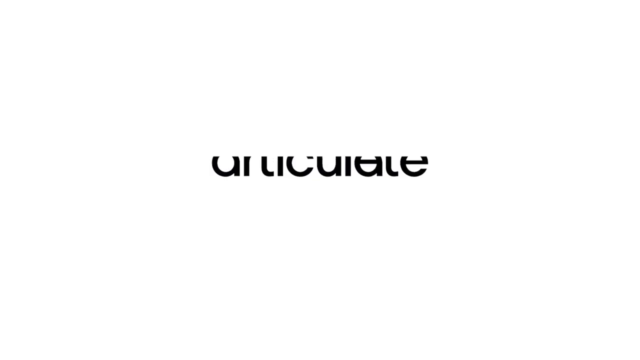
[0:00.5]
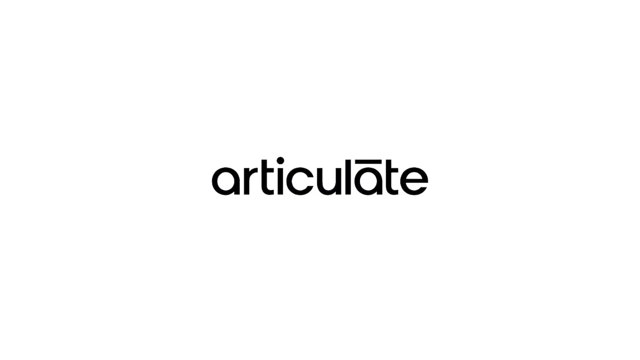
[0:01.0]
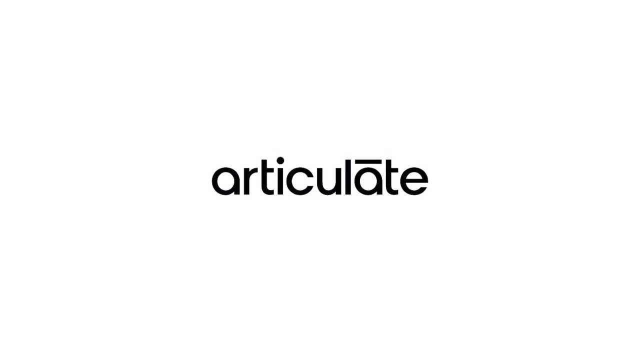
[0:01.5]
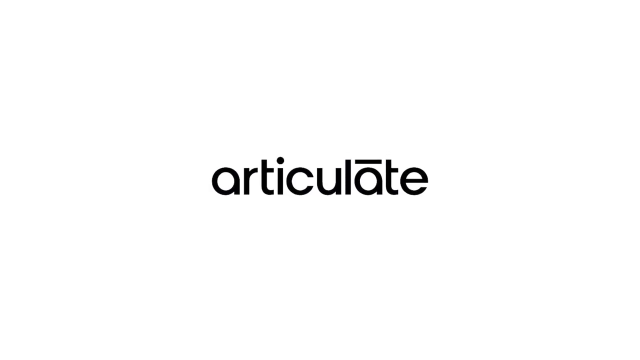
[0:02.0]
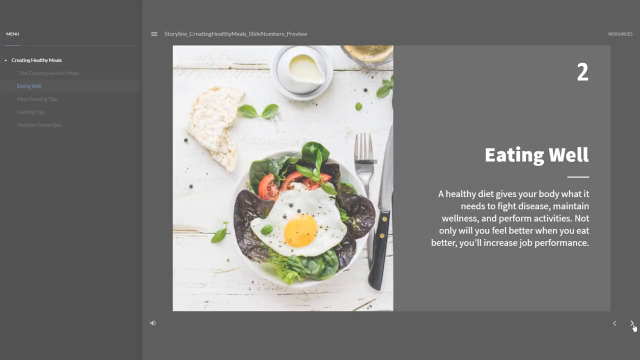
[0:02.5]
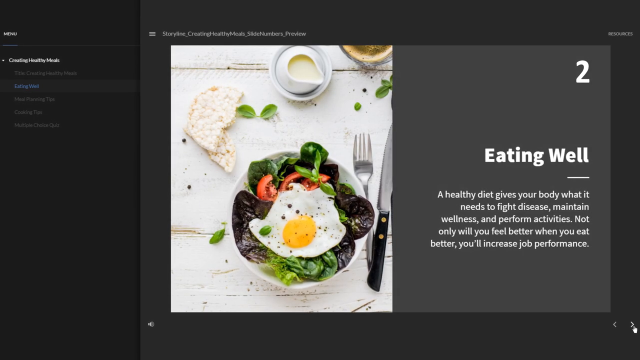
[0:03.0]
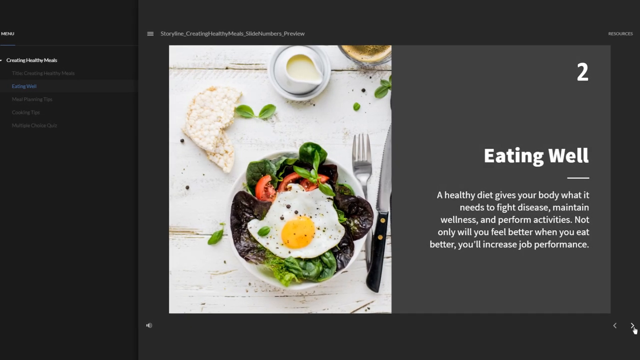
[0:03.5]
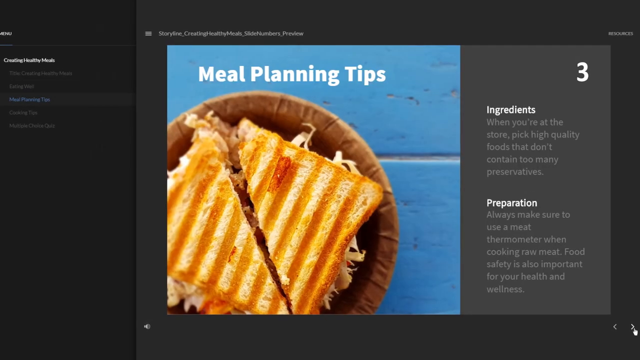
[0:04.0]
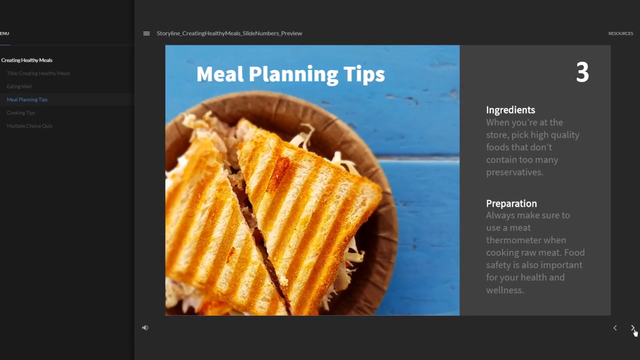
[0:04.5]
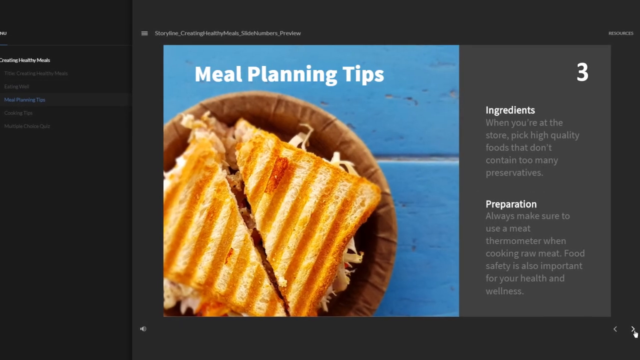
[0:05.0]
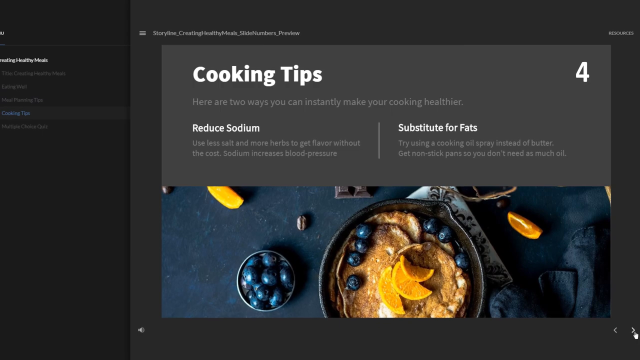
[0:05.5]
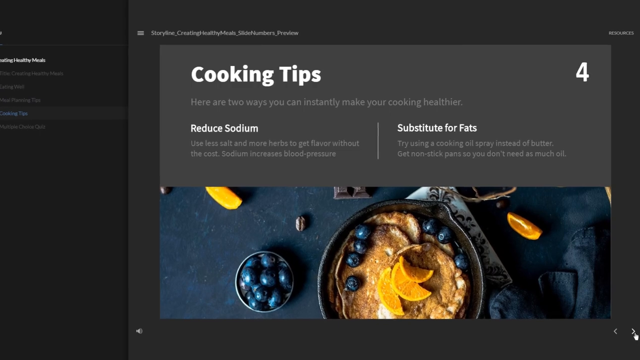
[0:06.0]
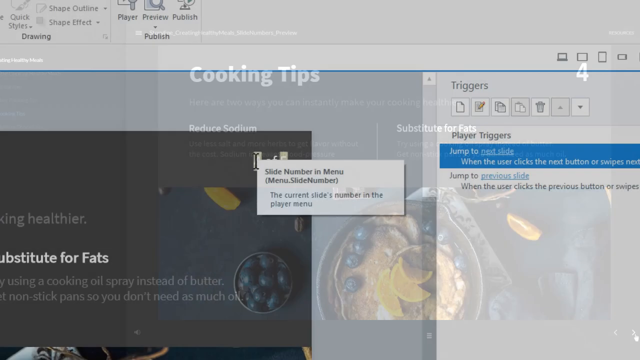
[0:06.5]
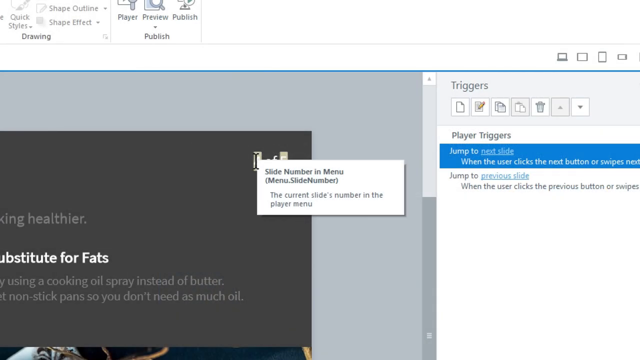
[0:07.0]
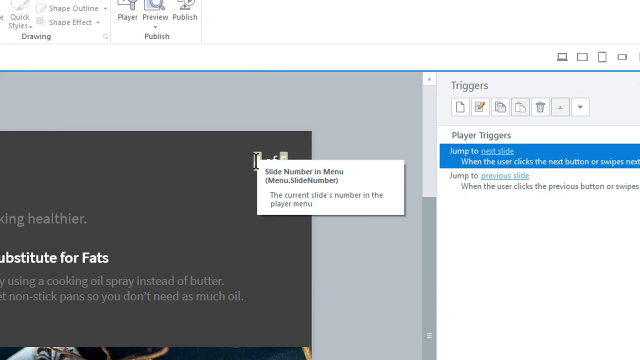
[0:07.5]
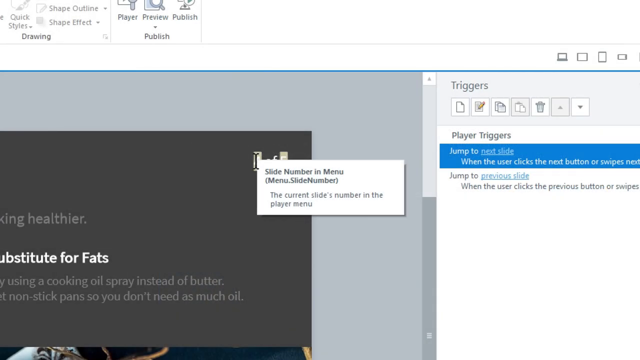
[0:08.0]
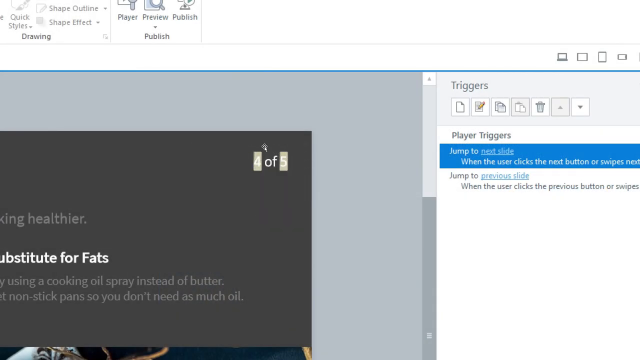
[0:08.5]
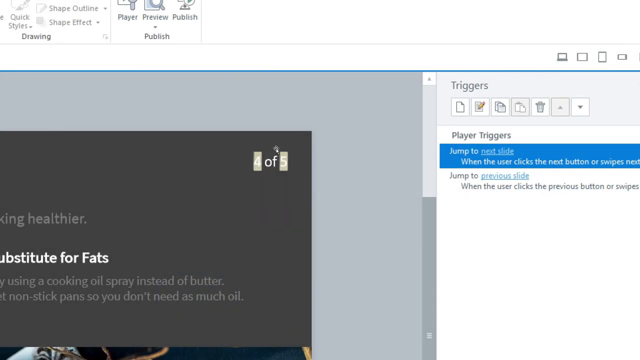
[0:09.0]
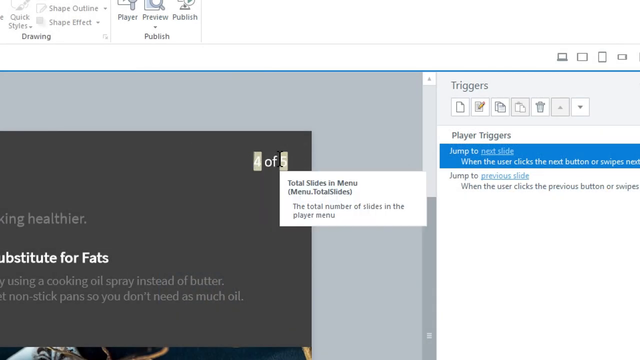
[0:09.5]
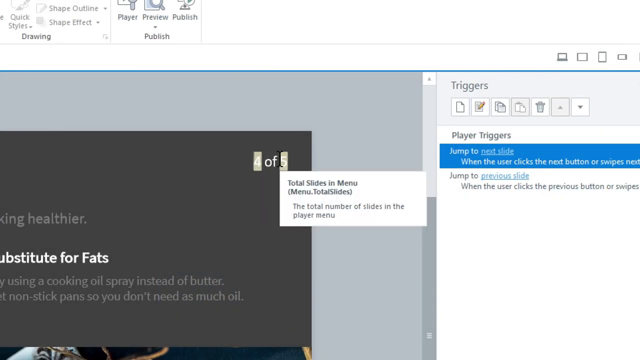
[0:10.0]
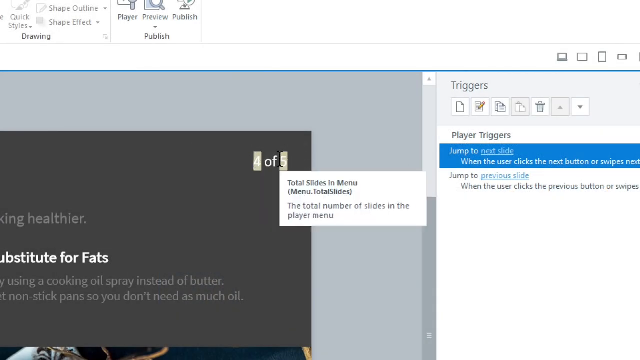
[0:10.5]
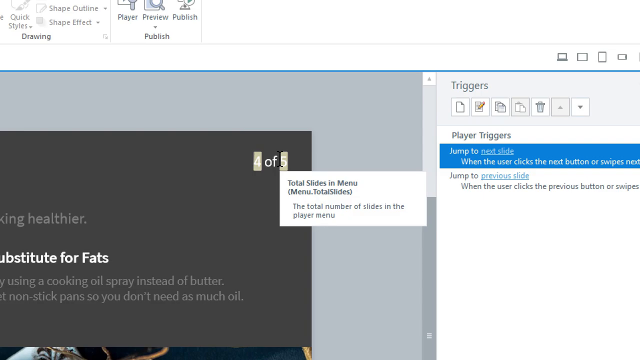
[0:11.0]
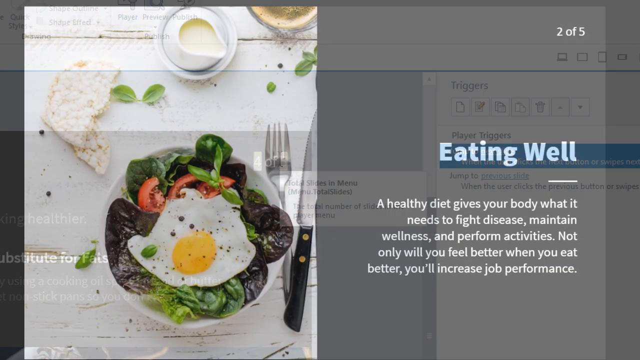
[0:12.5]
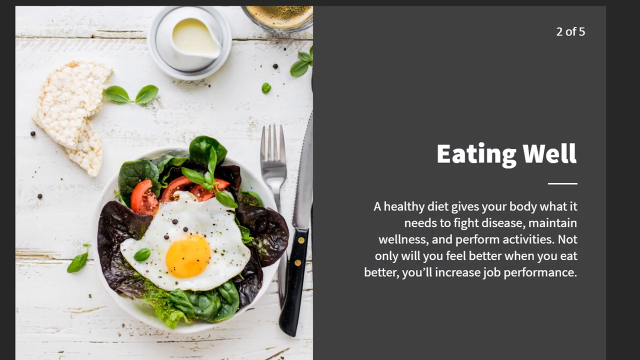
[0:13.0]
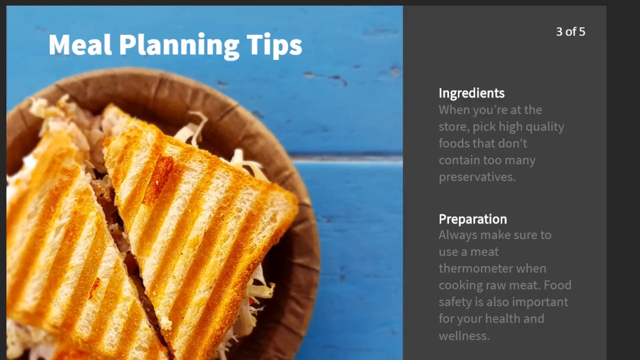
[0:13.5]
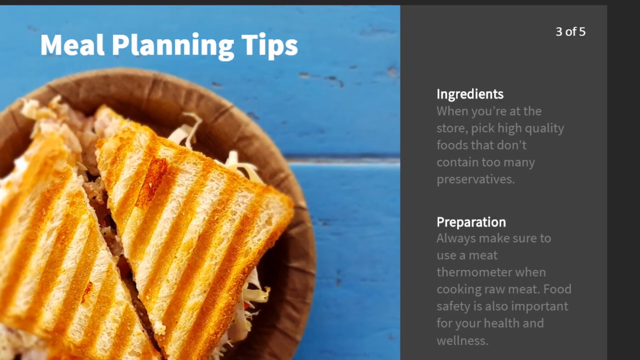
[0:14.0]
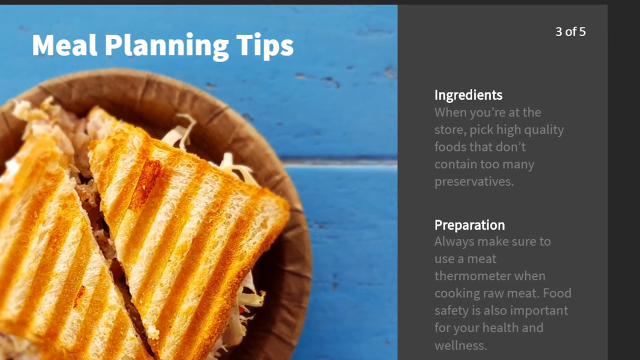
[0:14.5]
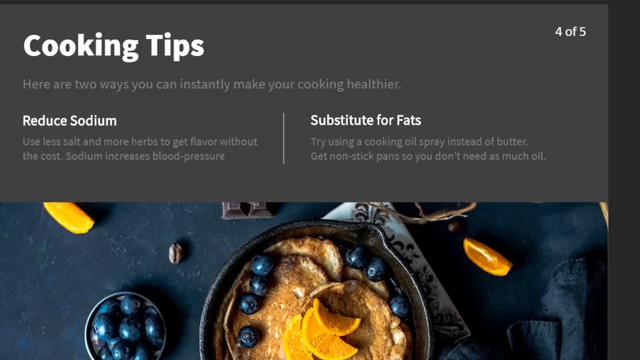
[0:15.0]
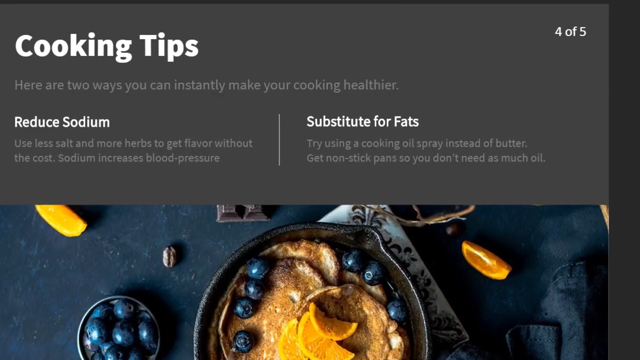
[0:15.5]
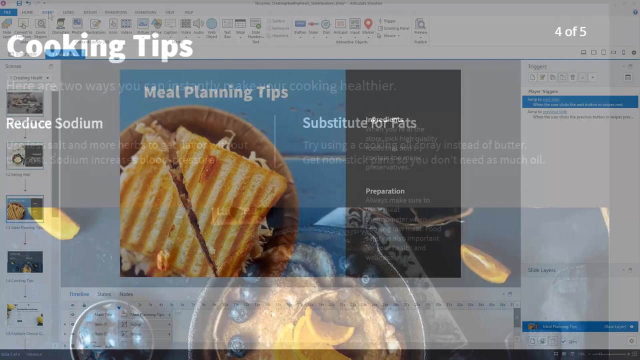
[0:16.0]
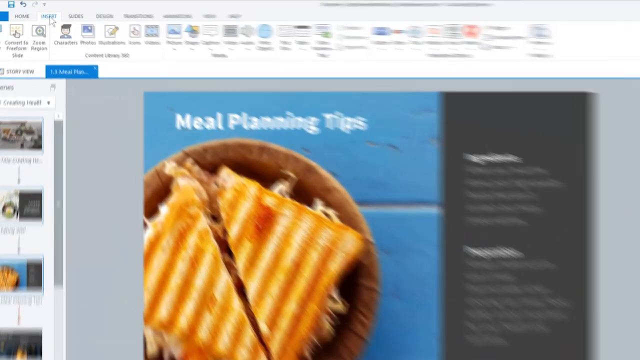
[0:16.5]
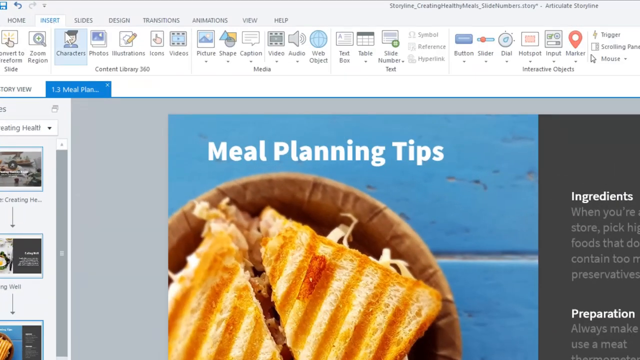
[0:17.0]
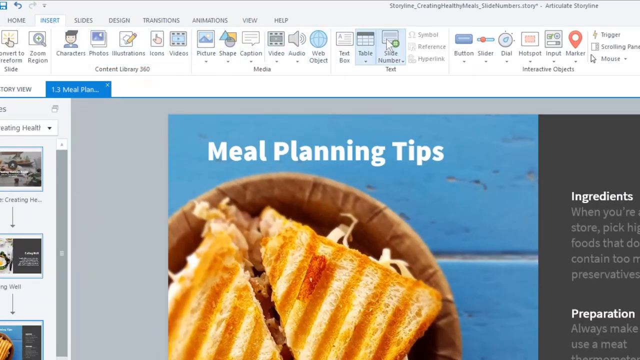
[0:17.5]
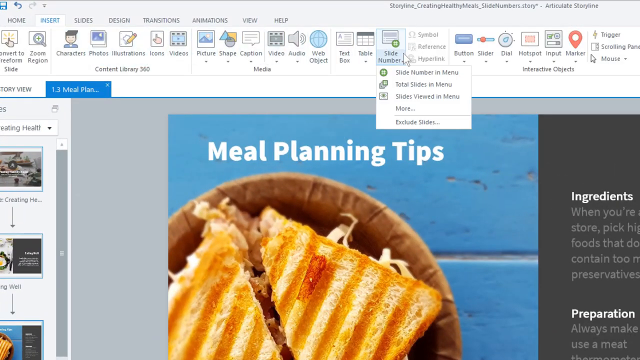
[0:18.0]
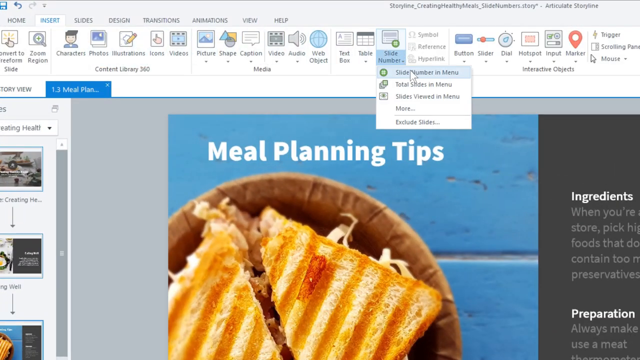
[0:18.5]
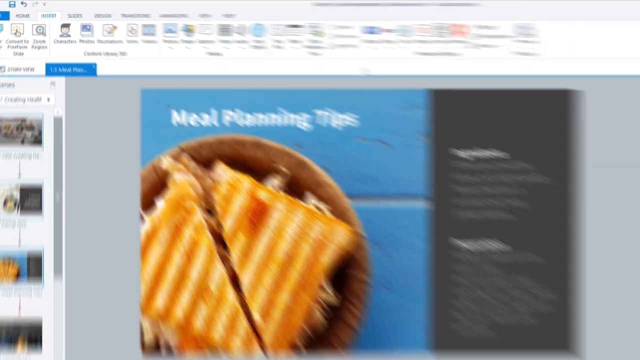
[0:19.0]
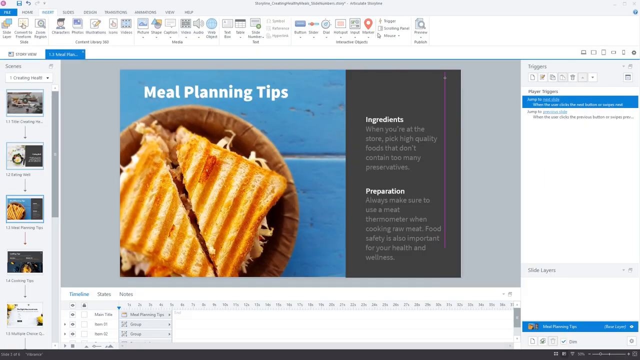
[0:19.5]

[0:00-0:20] The video concerns the computer program Articulate. It opens with the logo of the company, Articulate, then cuts to a menu. The program appears to be a creative one in which users can create different things; here the user is creating a visual menu. The first panel is an "eating well" slide with text about eating well in a white font. There are numbers at the top, so this is presumably page two of the menu. To the left of the text is a picture of food containing raw vegetables, an egg, and bread. The next slide is titled "meal planning tips" and has information about ingredients and preparation: the ingredients and preparation headings are in white text, each with gray subtext. A picture of a grilled sandwich is to the left of the text. The next slide, slide four, is cooking tips, with text about reducing sodium and substituting fats placed at the top of the slide and a picture of oats at the bottom. The video then cuts to the program itself, where the user edits parts of the slide, such as a page number that shows the total slides in the menu. The user makes a change to the total slides, and the total changes as they go through the menu. The user adjusts the numbering of the slides, especially toward the end.